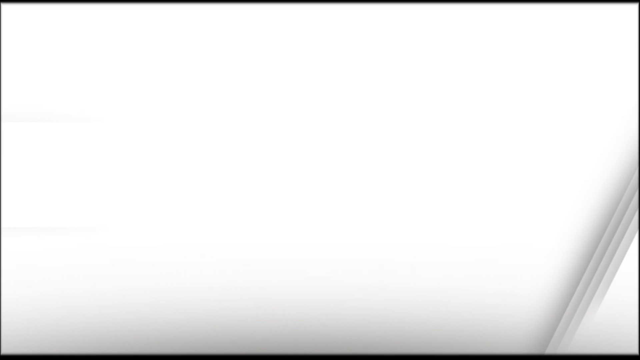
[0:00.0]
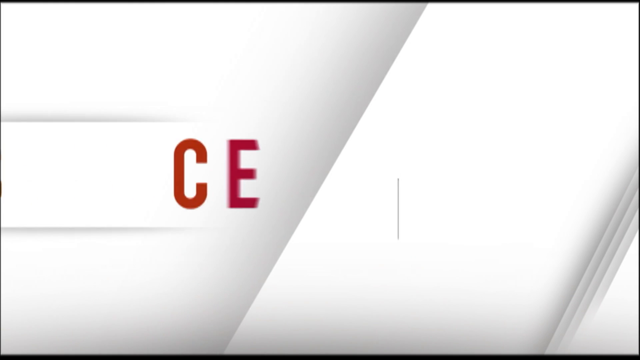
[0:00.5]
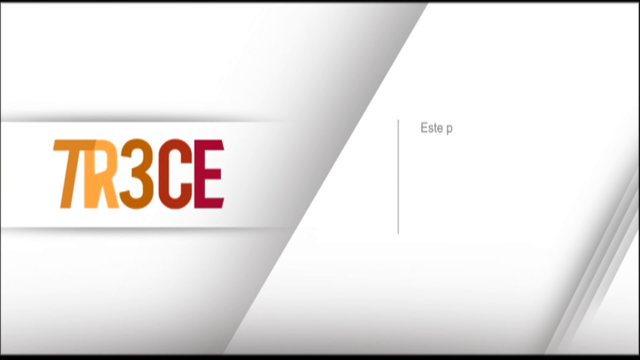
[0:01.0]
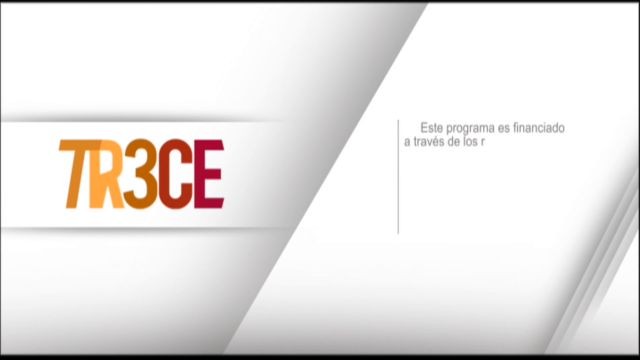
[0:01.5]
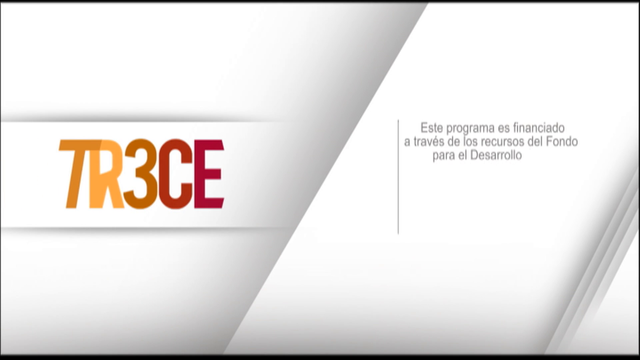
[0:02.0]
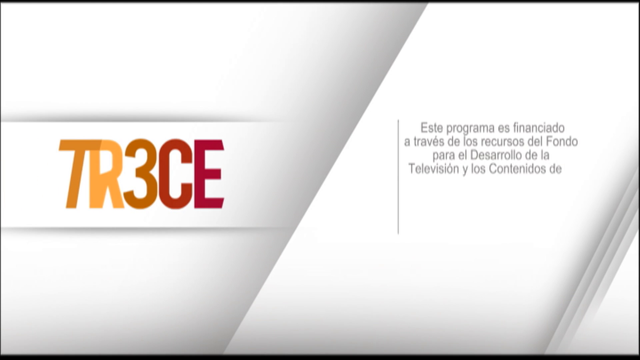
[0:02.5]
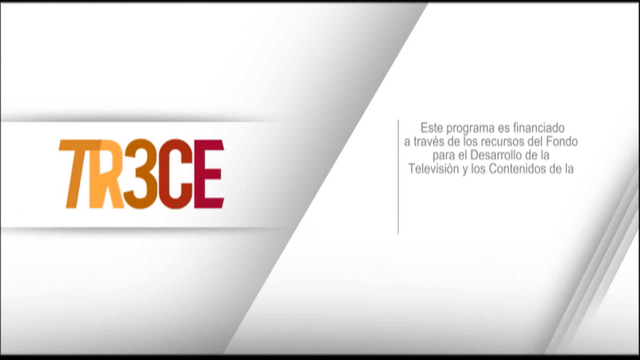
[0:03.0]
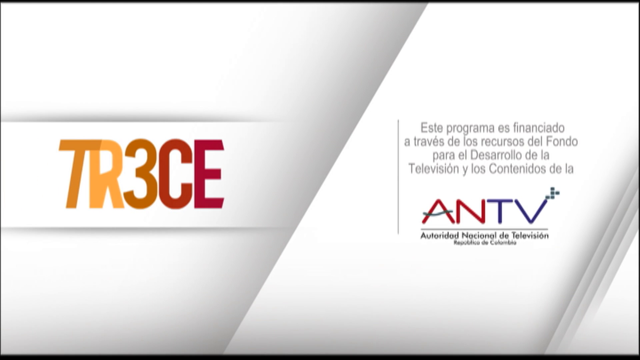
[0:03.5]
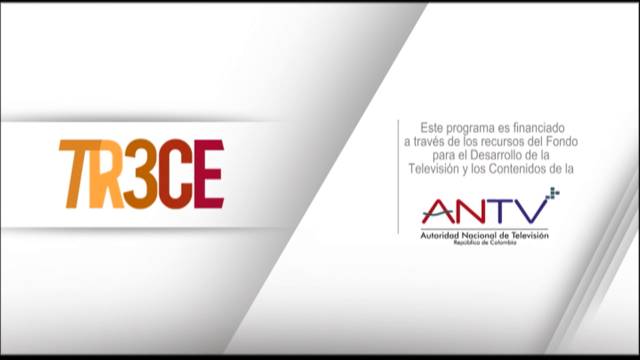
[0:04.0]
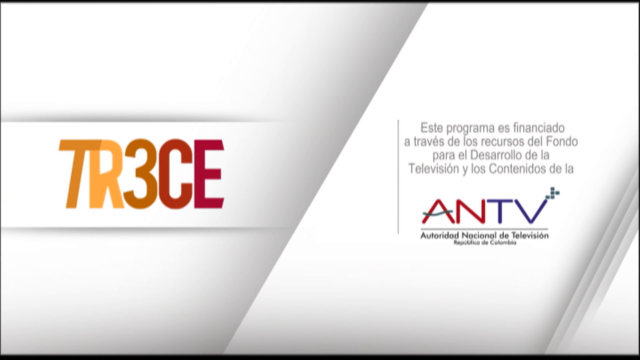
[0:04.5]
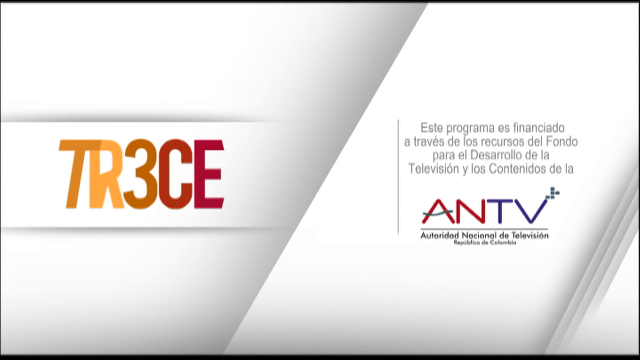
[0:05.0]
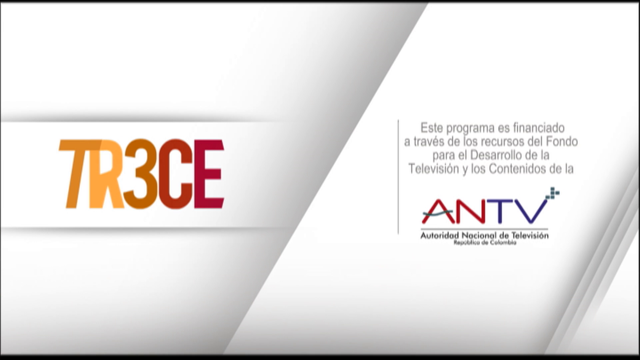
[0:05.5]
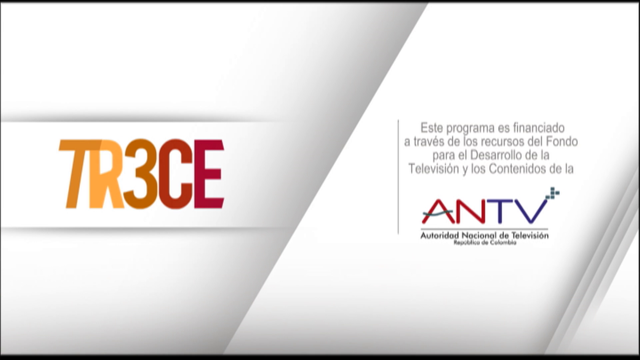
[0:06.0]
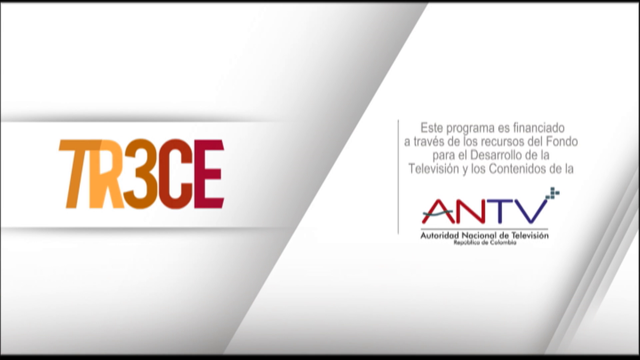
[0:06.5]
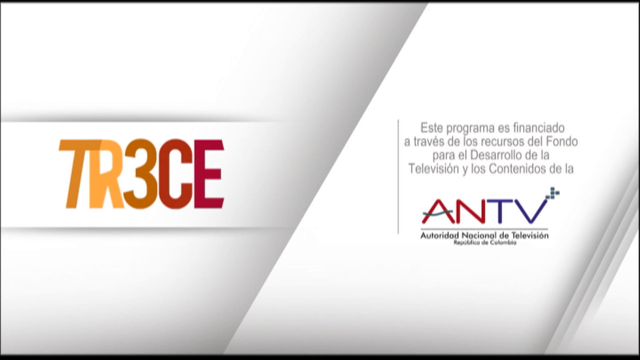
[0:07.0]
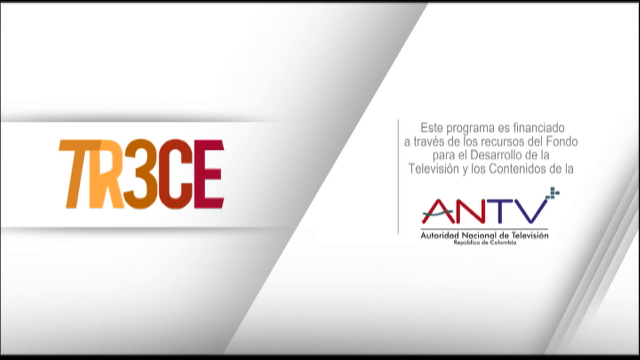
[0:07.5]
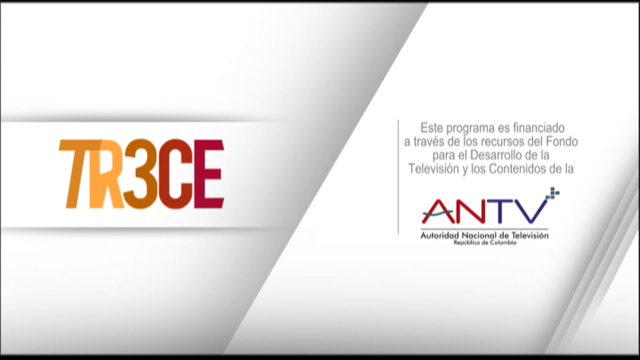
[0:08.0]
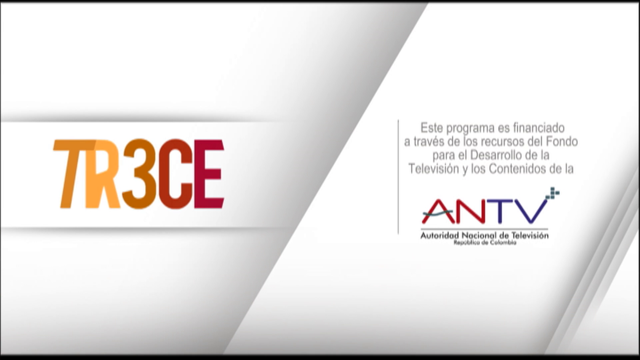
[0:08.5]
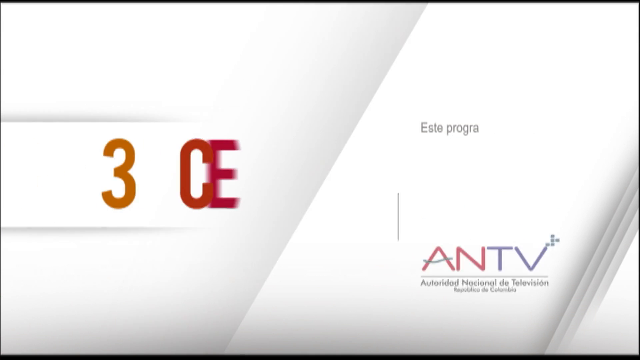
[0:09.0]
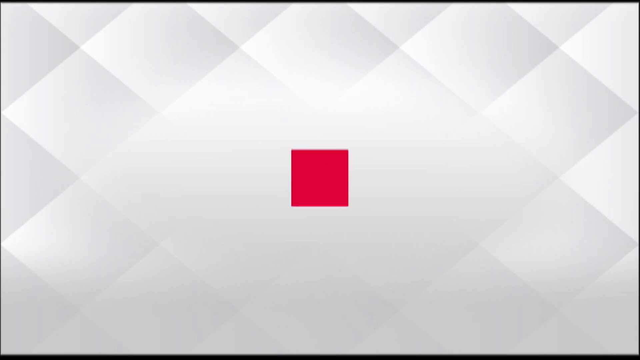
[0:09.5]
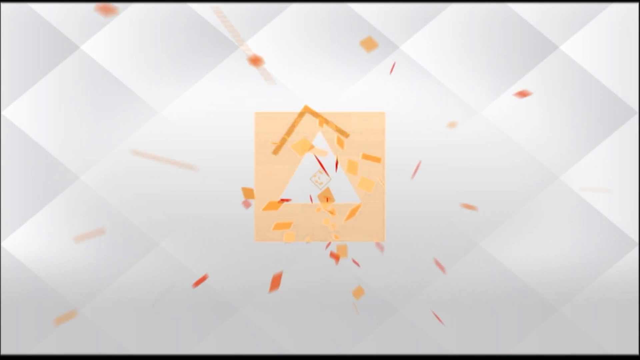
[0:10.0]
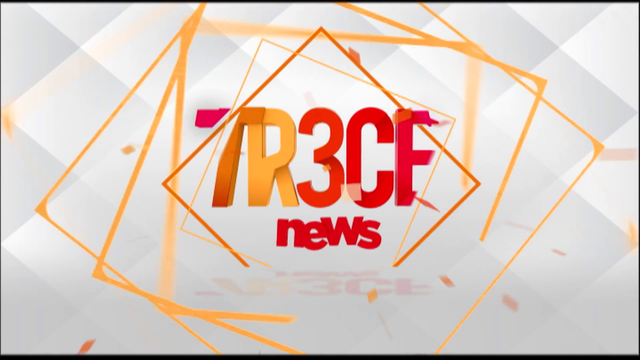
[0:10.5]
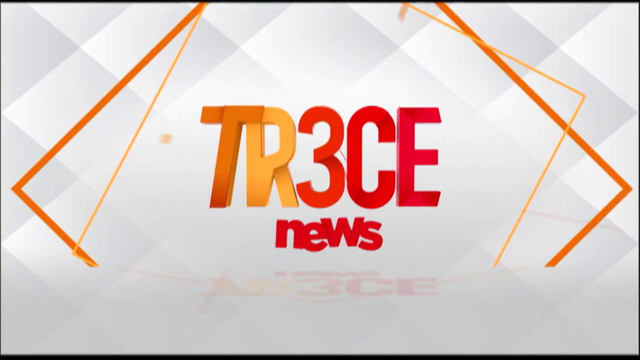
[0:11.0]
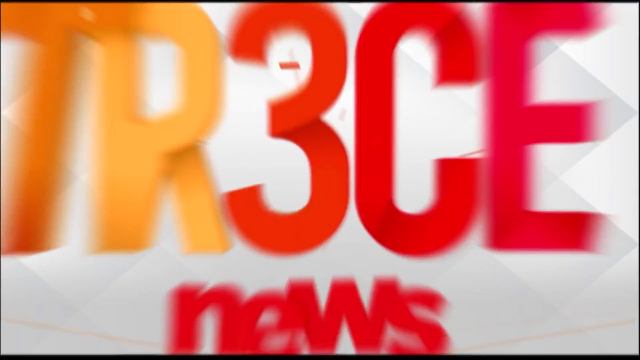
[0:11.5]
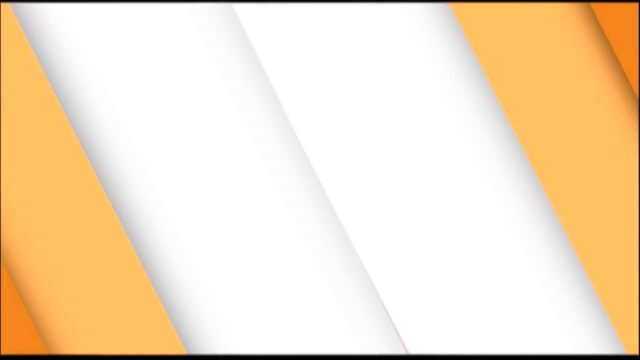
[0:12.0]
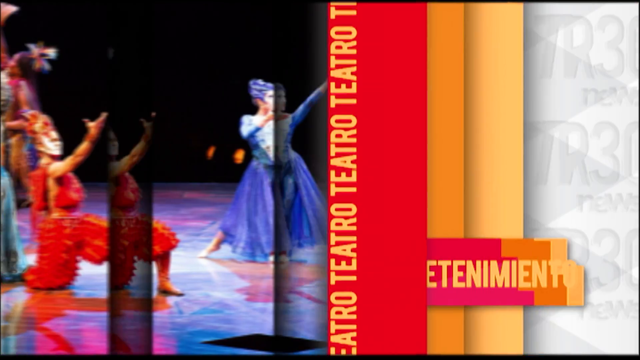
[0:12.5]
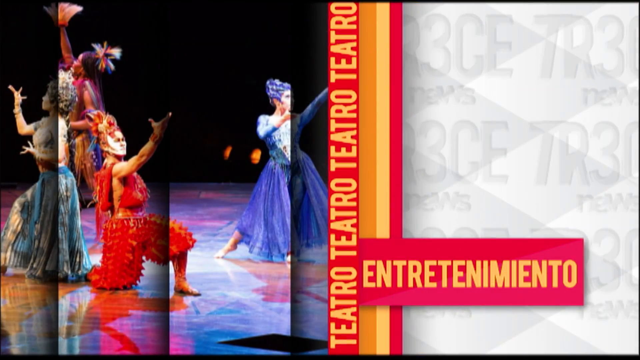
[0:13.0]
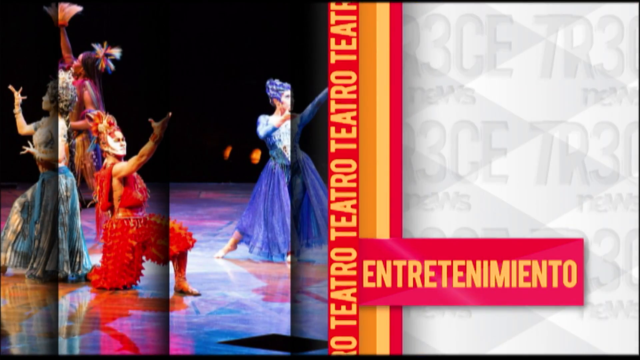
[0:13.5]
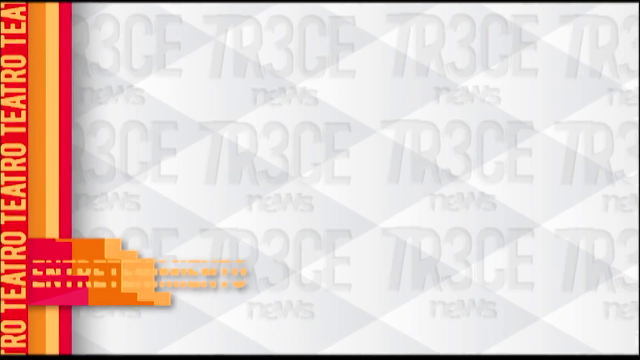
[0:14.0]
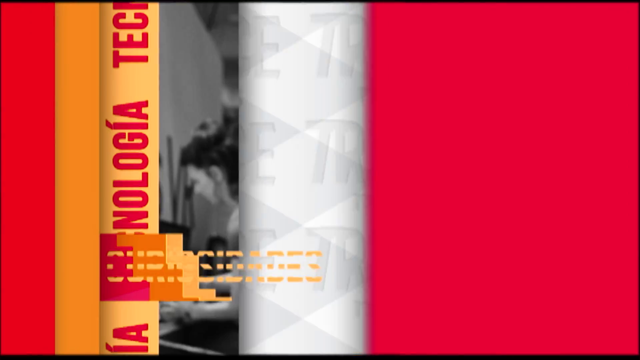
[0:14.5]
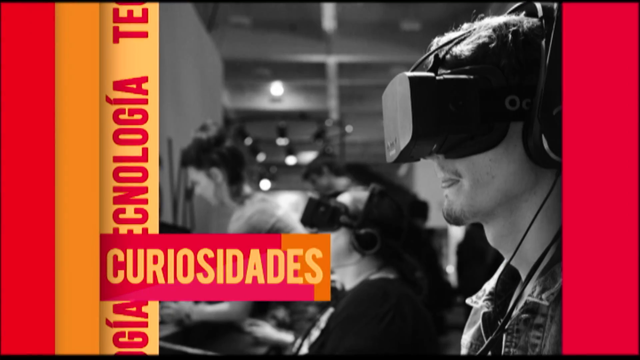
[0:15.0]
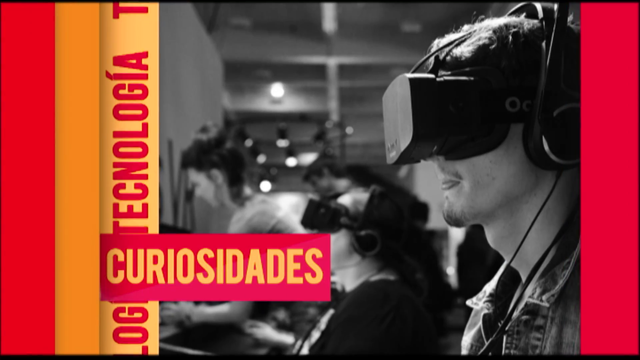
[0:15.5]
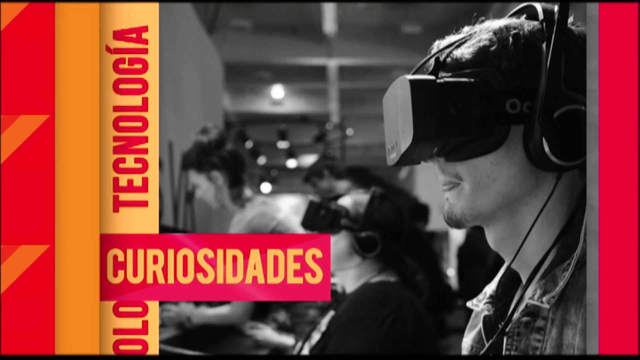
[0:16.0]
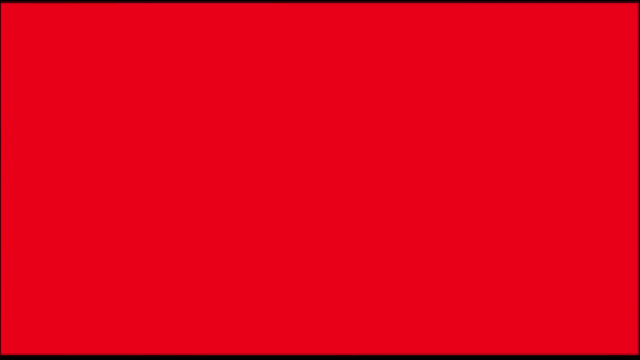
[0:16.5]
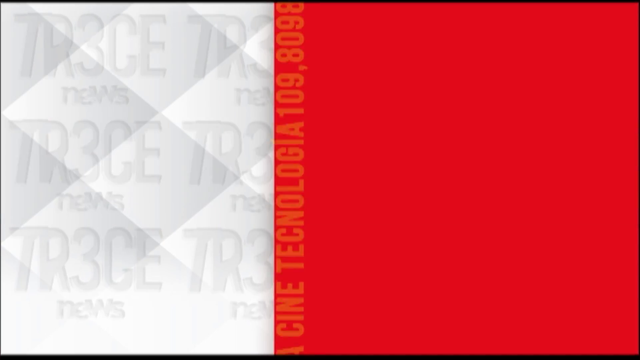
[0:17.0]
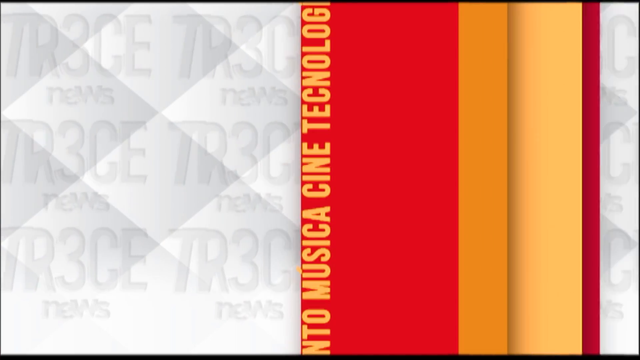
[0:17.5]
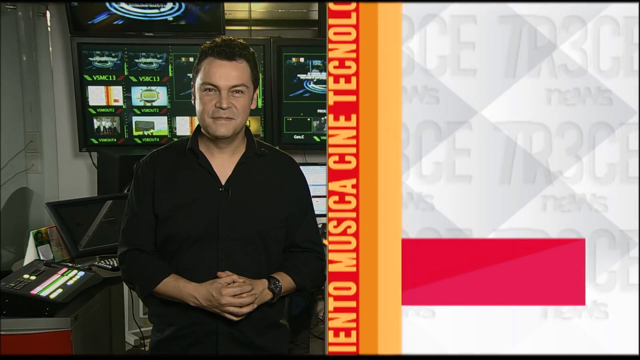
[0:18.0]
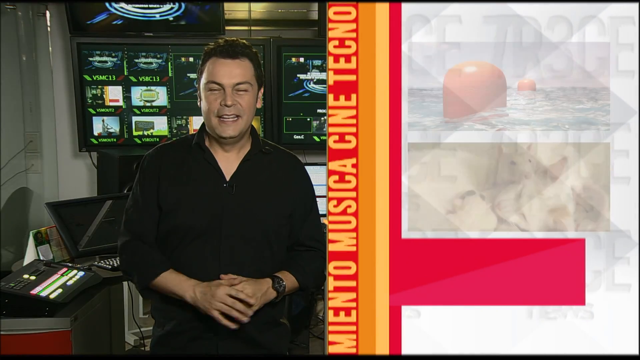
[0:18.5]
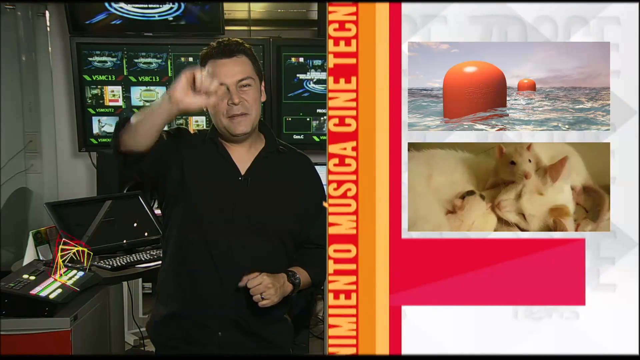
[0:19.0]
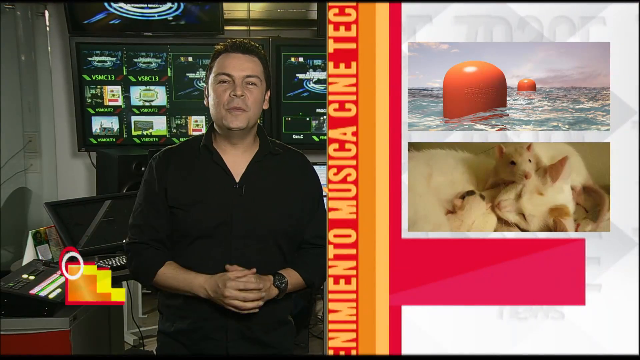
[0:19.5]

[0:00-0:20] A large black screen appears, and the letters "T R 3 C E" pop up on it, with "TR3" in yellow and "CE" in red. On the right side, text in a foreign language appears, including the words "a través de los recursos del fondo". ANTV is shown as the broadcasting channel. The letters then disappear from the screen. Next, yellow boxes with different patterns pop up on a white background, and as they appear, the writing "TRCE" pops up on the screen again in yellow and red. The screen then becomes dominated by different colours: red on the right, red on the left, and a very big area of yellow in the middle. The words "teatro teatro" appear, and then musicians and dancers appear on the screen, apparently performing sacred dances; one is in blue, another in red, and another in blue.